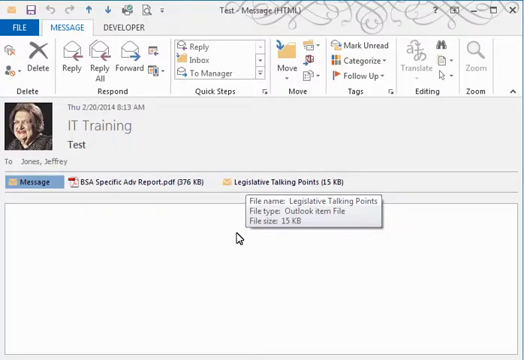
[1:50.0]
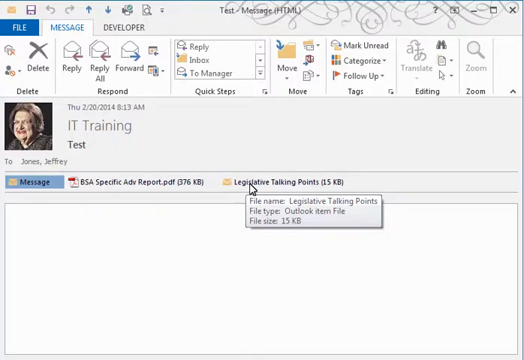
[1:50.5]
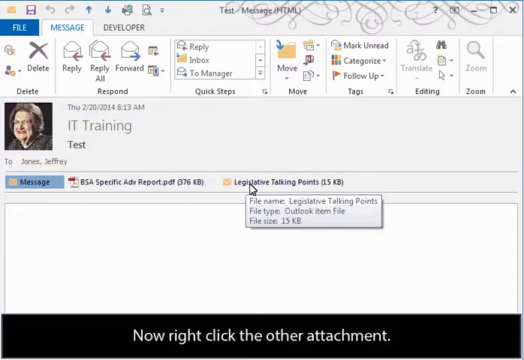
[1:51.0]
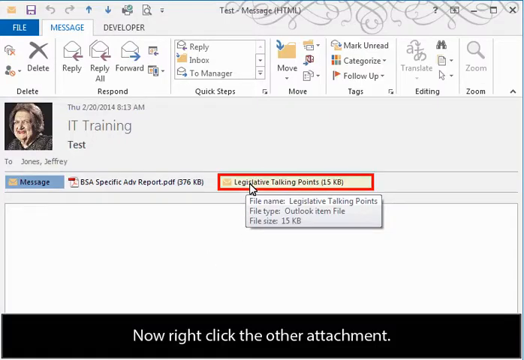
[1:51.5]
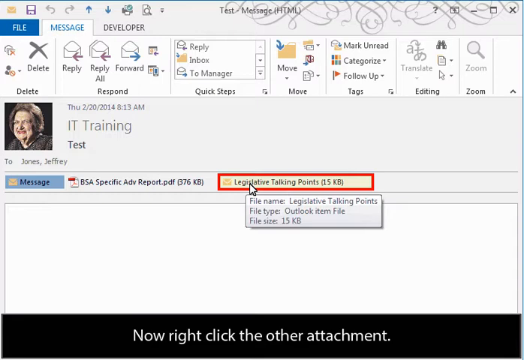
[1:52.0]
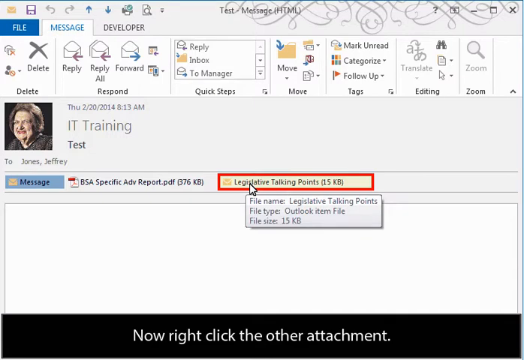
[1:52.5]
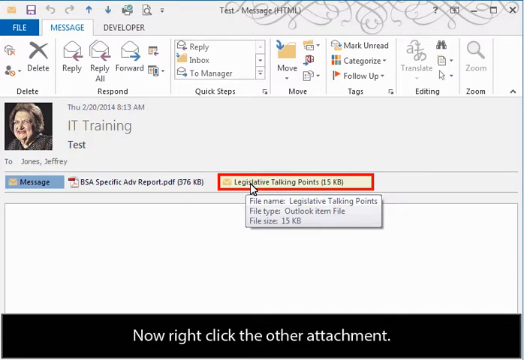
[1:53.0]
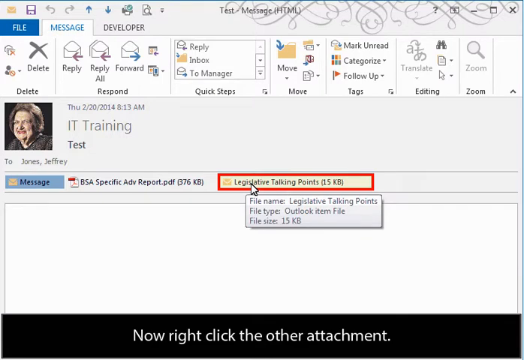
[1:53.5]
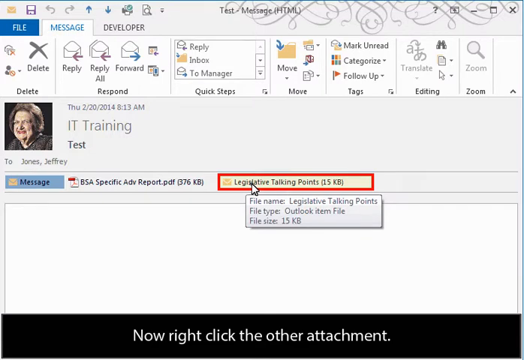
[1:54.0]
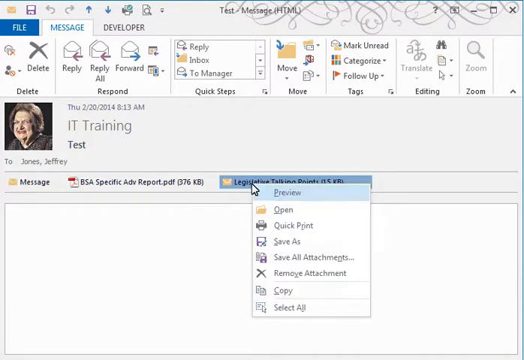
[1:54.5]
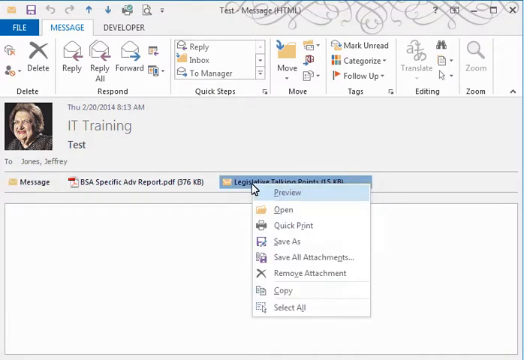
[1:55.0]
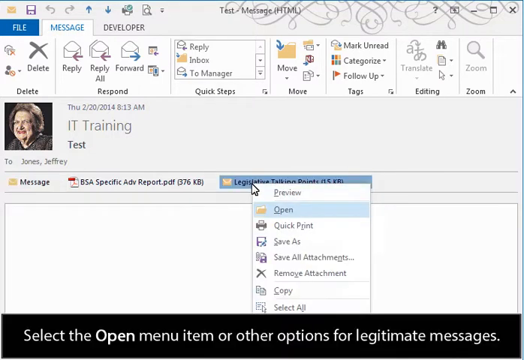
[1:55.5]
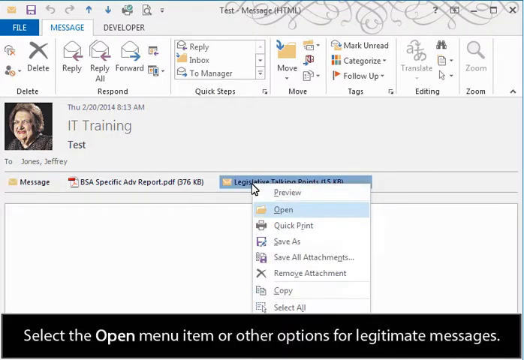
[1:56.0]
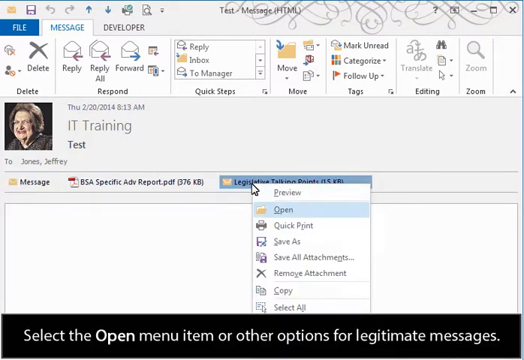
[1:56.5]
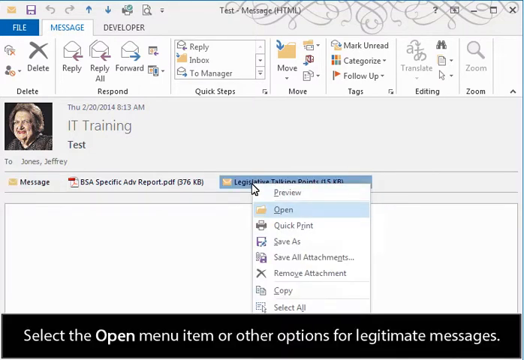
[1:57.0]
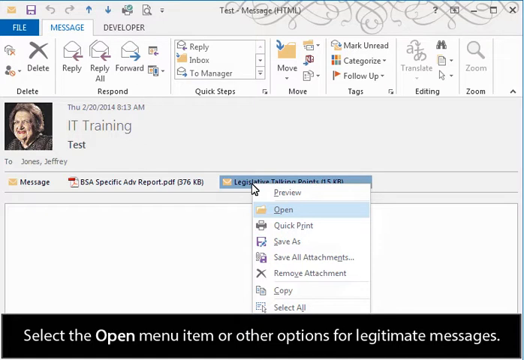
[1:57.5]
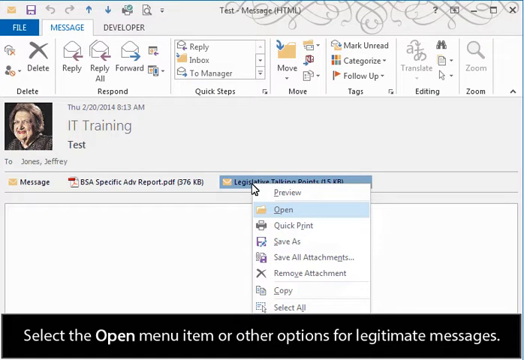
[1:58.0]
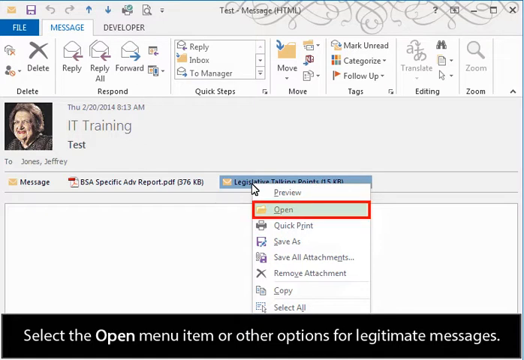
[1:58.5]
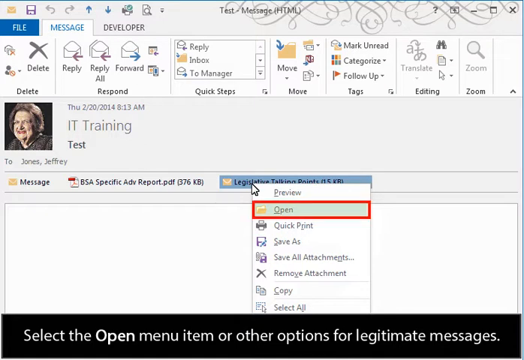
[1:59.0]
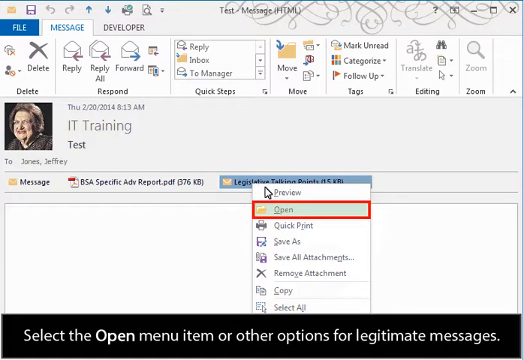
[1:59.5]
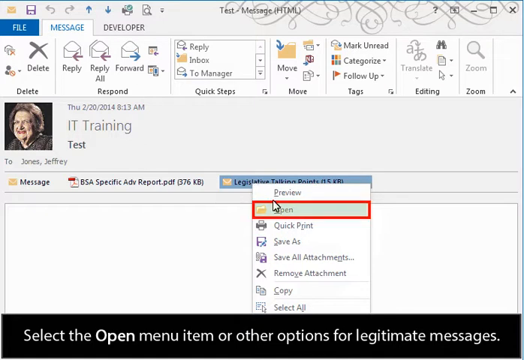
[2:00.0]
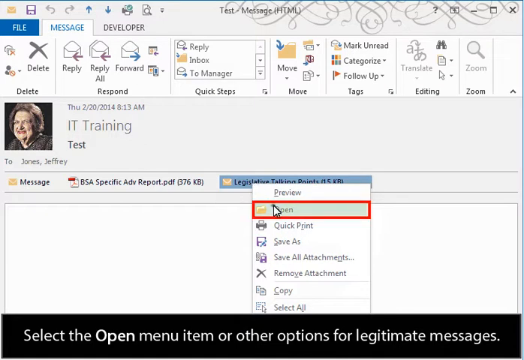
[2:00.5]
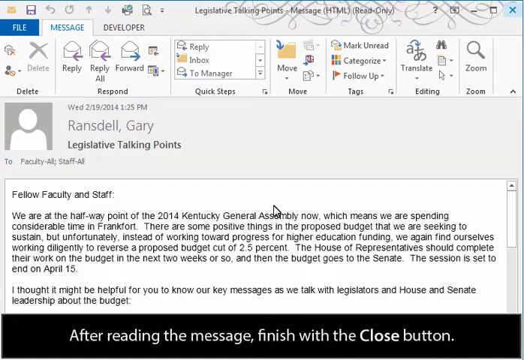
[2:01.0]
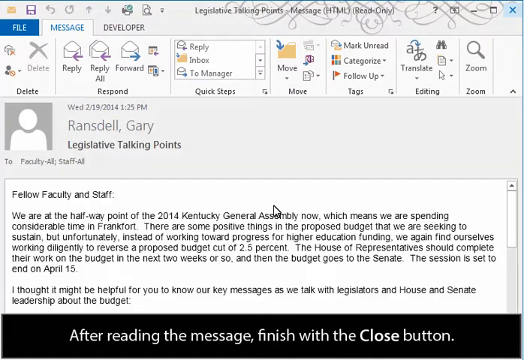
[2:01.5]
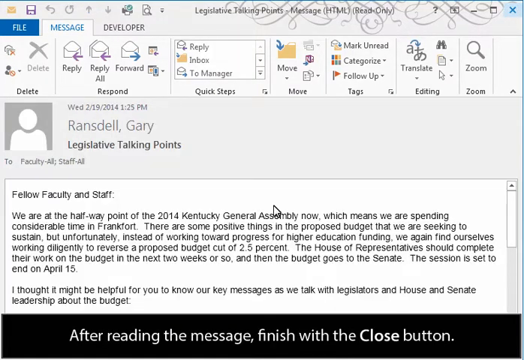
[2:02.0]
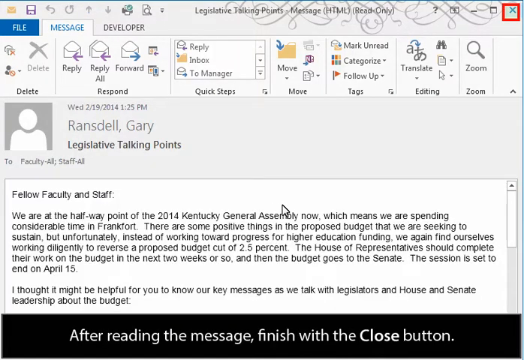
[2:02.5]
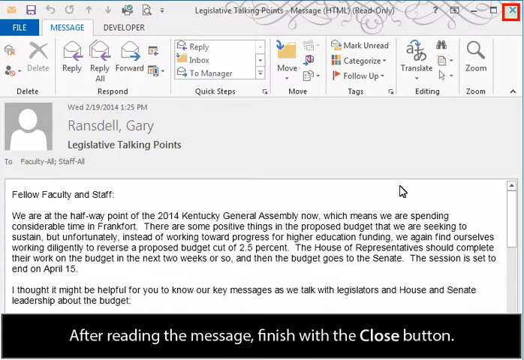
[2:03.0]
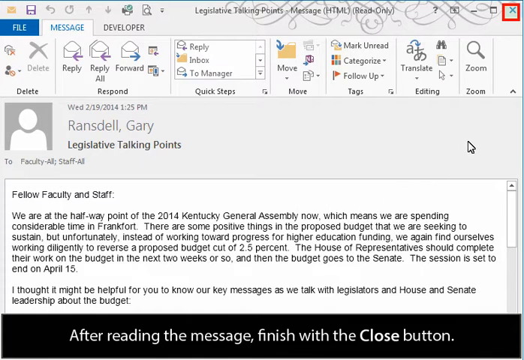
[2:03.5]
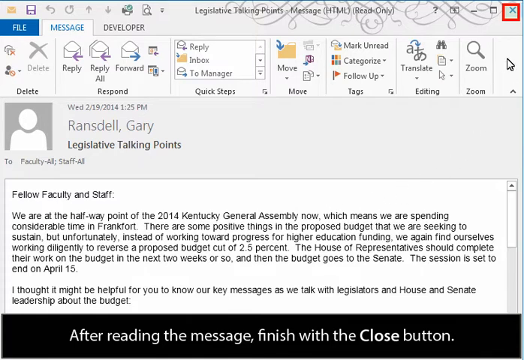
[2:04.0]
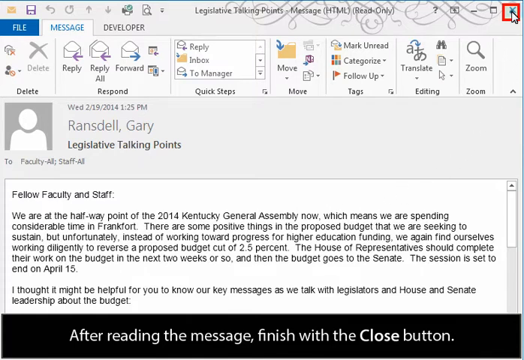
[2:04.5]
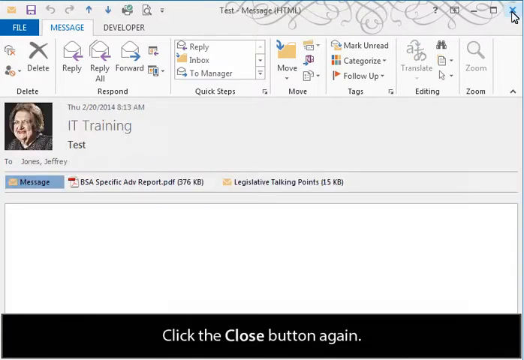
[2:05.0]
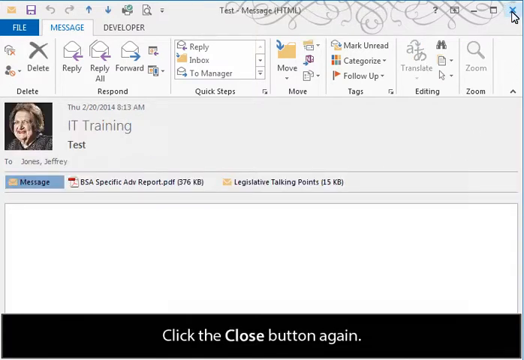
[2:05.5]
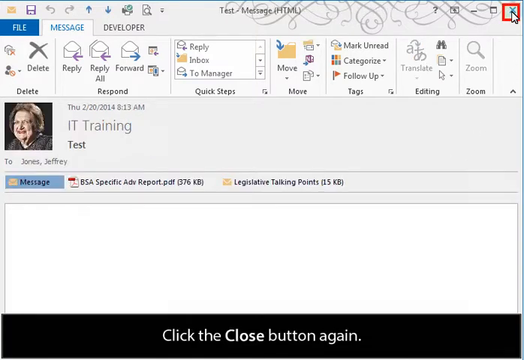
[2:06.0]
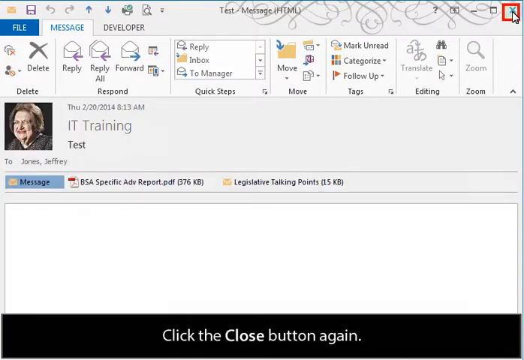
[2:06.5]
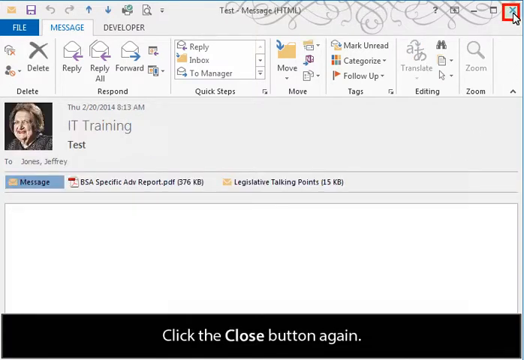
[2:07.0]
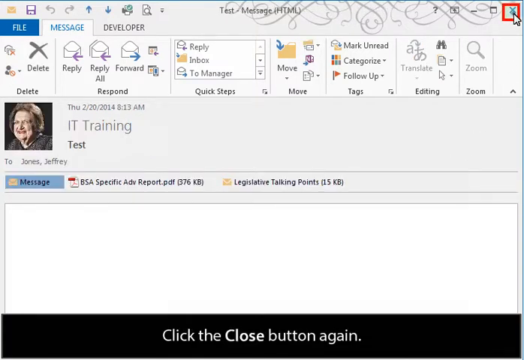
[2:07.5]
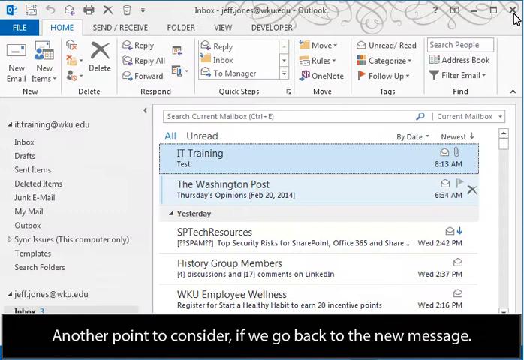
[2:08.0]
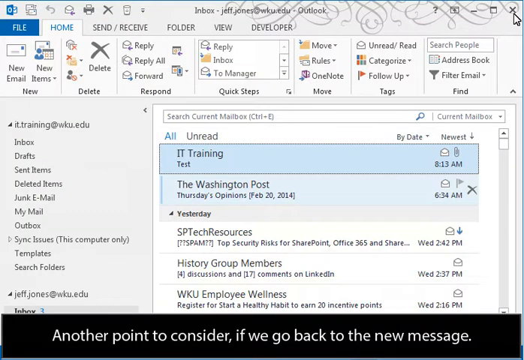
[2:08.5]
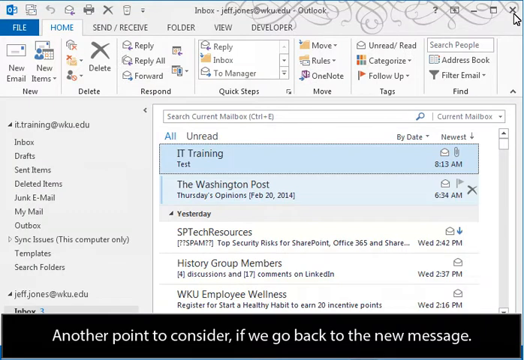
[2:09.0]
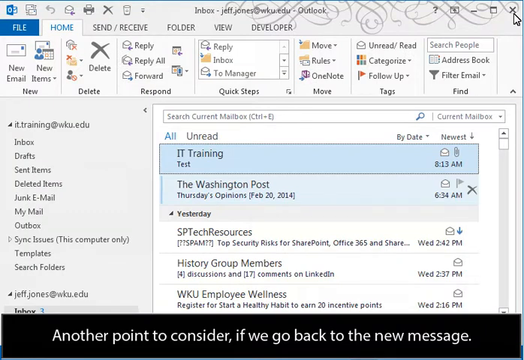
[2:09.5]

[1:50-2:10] The test email is open, with the subject line "IT training" and the sender avatar of an older woman with chin-length brown hair, glasses and red lipstick. The legislative talking points attachment is highlighted with a red square, and the user right-clicks it, bringing up a menu. The user selects Open, which has a red frame around it, and a message opens with the name "Gary Ransdell" at the top and the title "Legislative Talking Points." It shows "to faculty-all, staff-all," and below that a text box contains a letter addressed to fellow faculty and staff. The X at the top right of the message is highlighted with a red box, and the user clicks it, closing the legislative talking points message and returning to the IT training test email. That email's X button is then highlighted in red, and the cursor clicks it, returning to the Outlook inbox for jeff.jones@wku.edu.